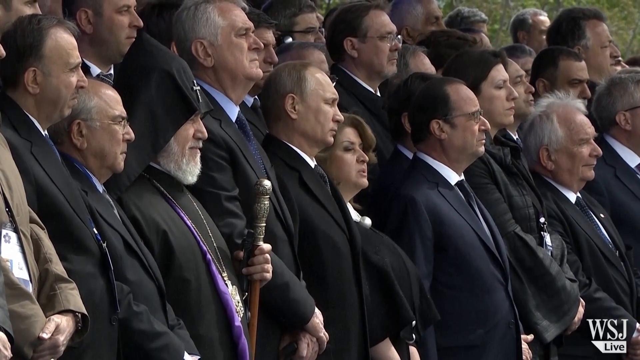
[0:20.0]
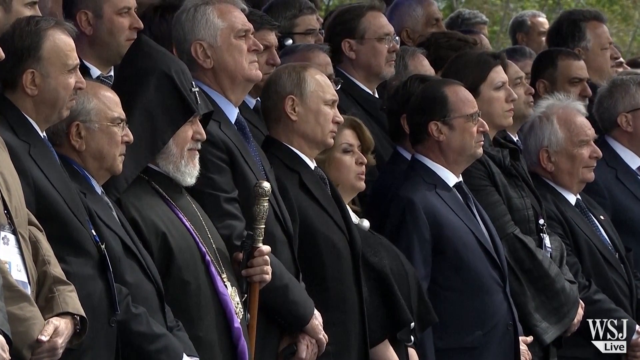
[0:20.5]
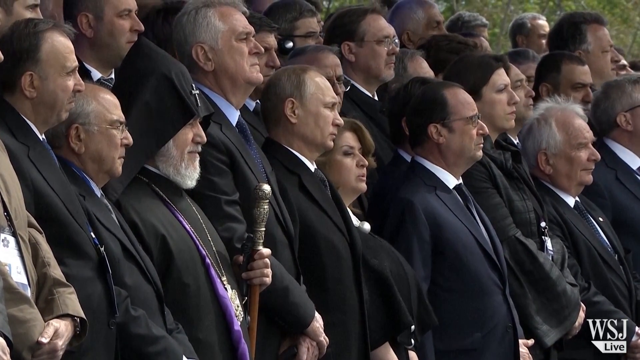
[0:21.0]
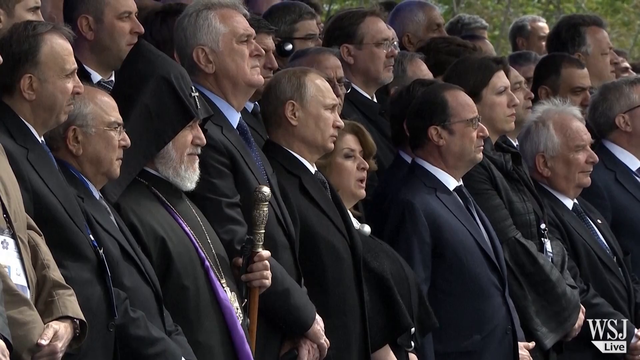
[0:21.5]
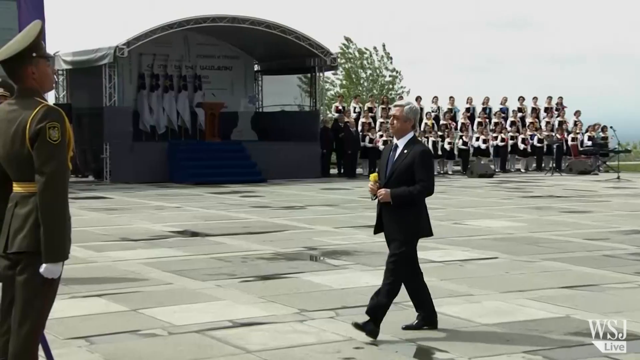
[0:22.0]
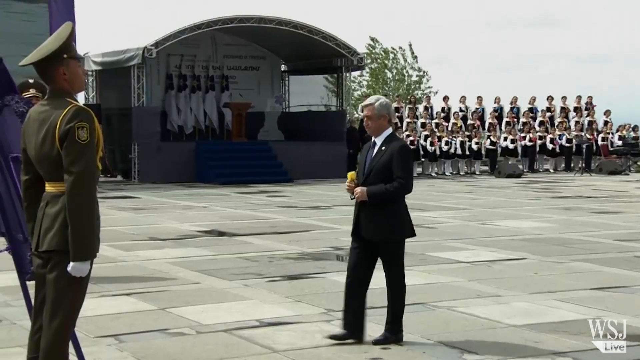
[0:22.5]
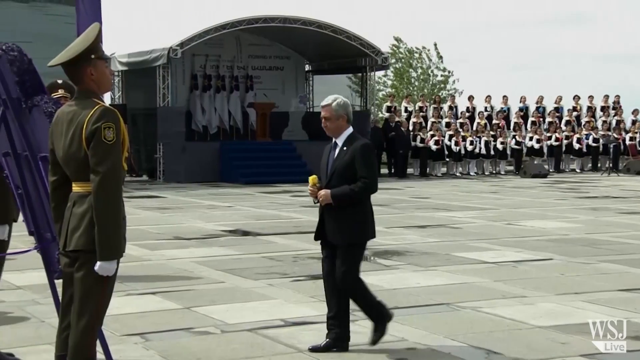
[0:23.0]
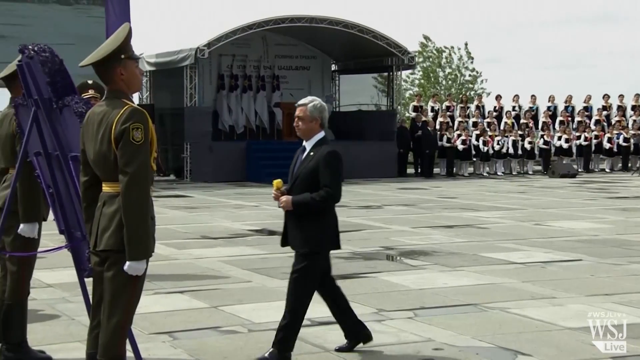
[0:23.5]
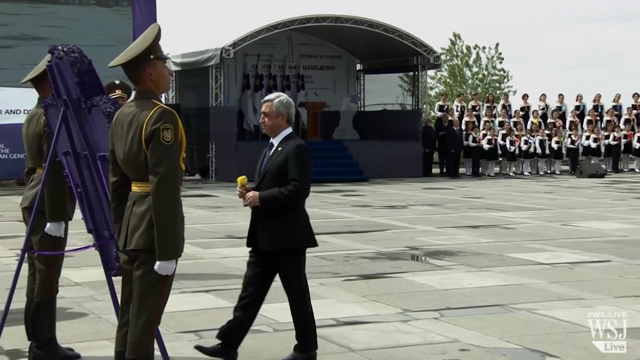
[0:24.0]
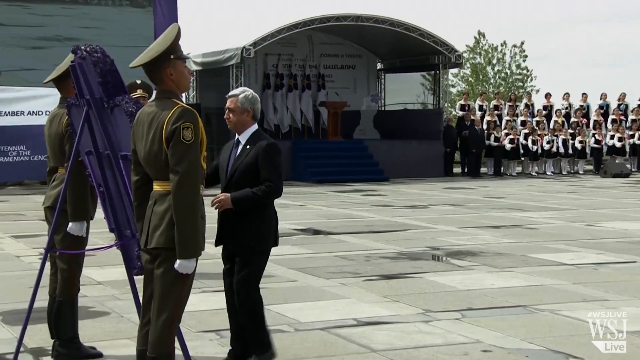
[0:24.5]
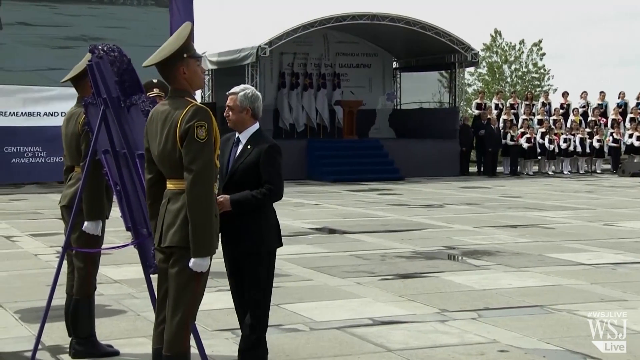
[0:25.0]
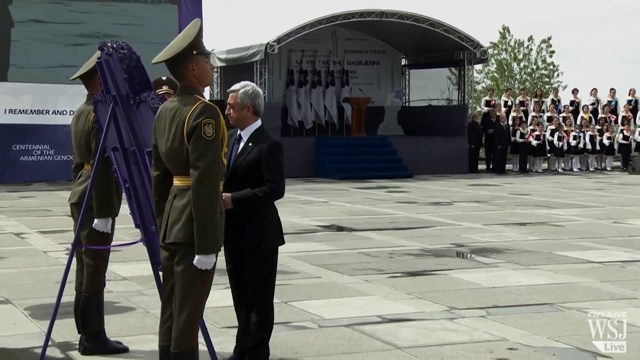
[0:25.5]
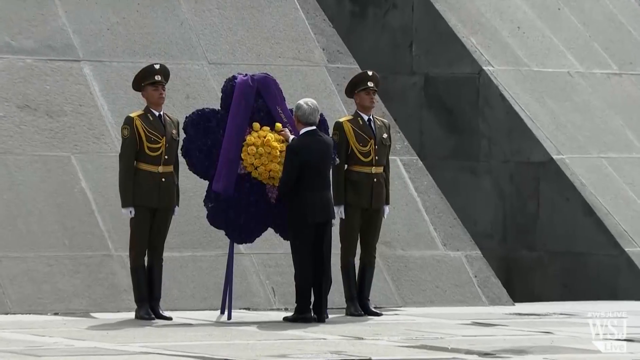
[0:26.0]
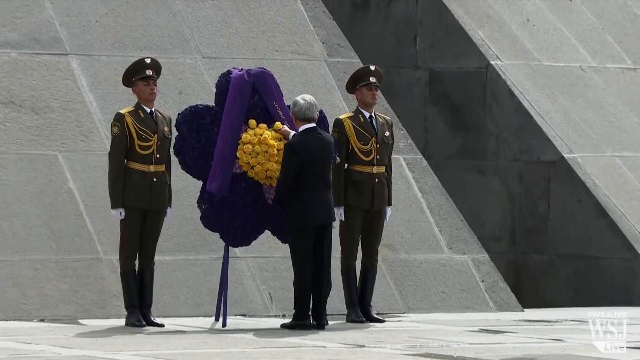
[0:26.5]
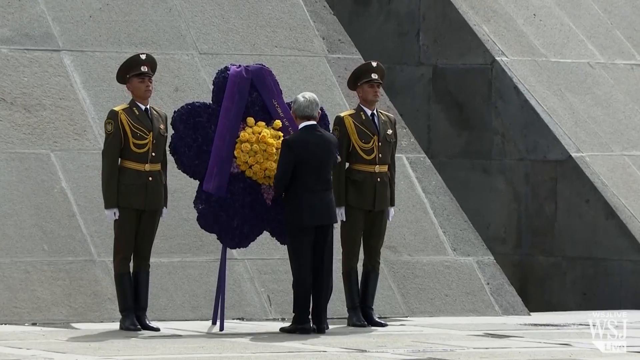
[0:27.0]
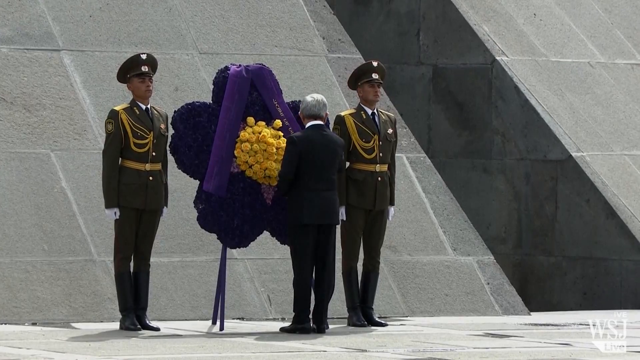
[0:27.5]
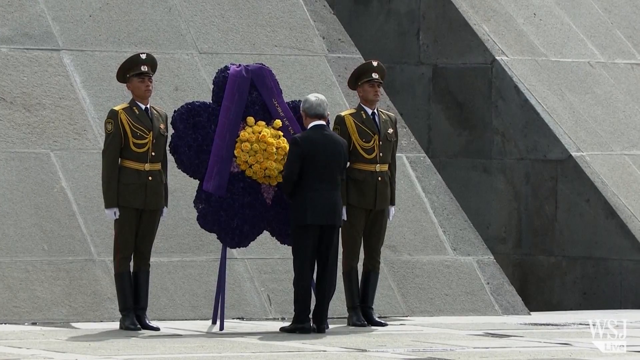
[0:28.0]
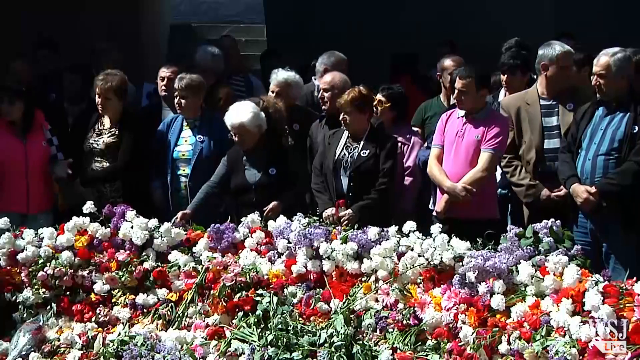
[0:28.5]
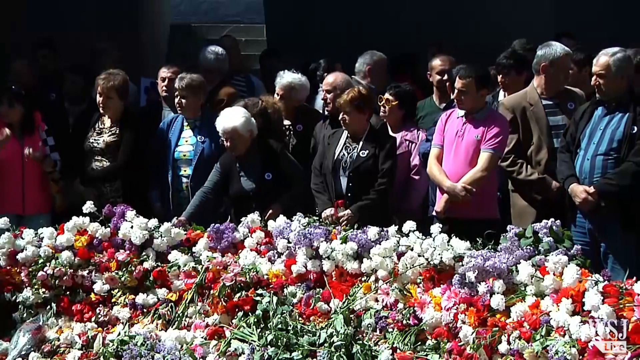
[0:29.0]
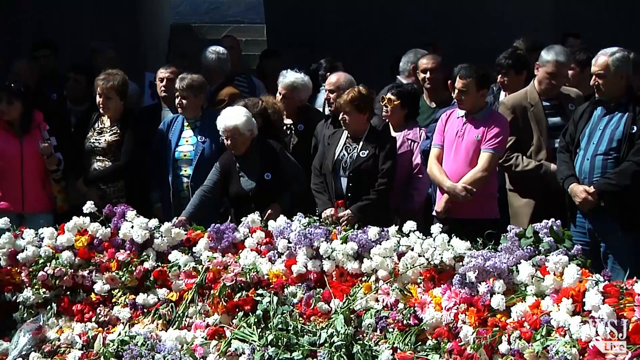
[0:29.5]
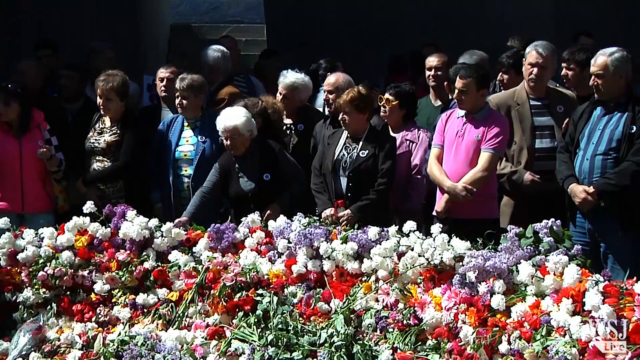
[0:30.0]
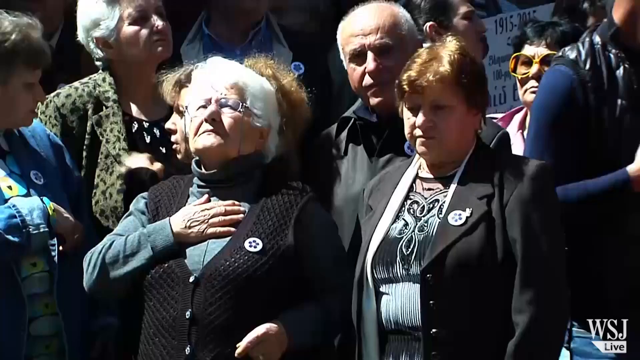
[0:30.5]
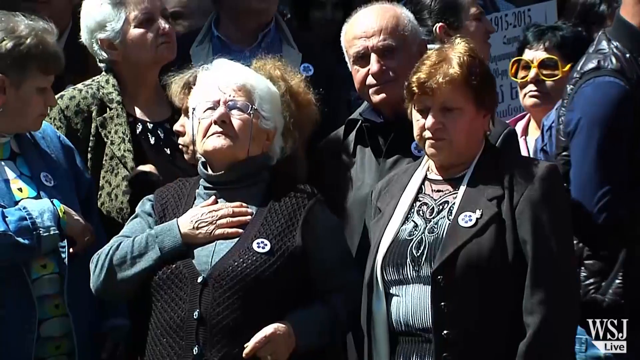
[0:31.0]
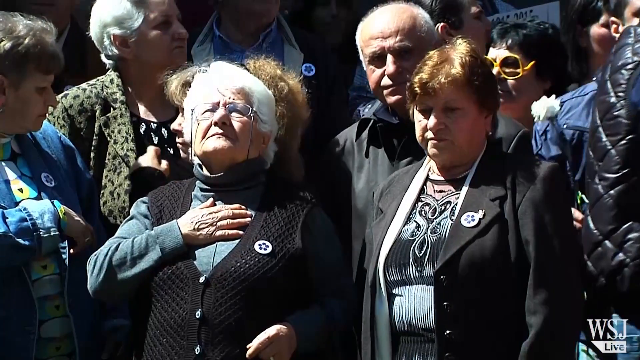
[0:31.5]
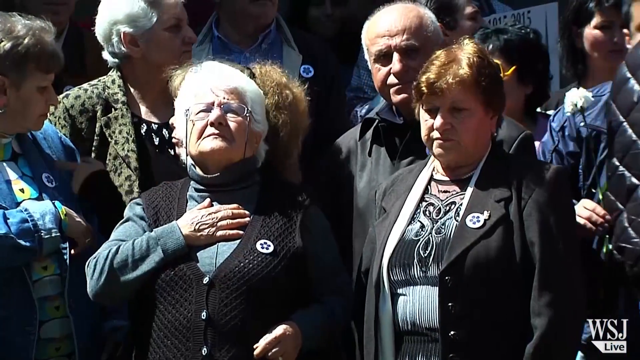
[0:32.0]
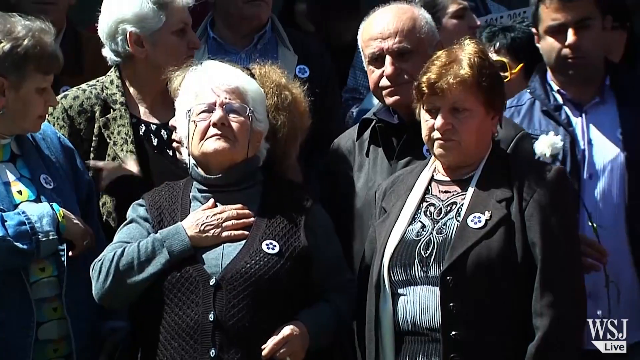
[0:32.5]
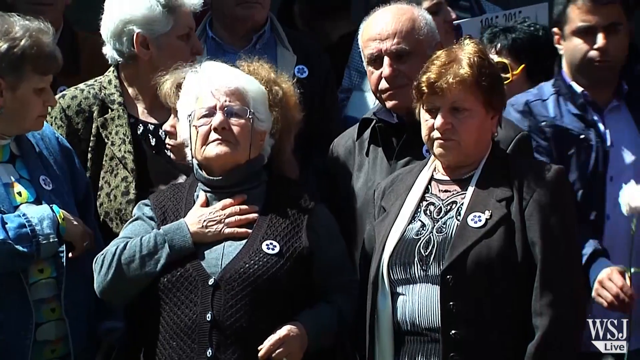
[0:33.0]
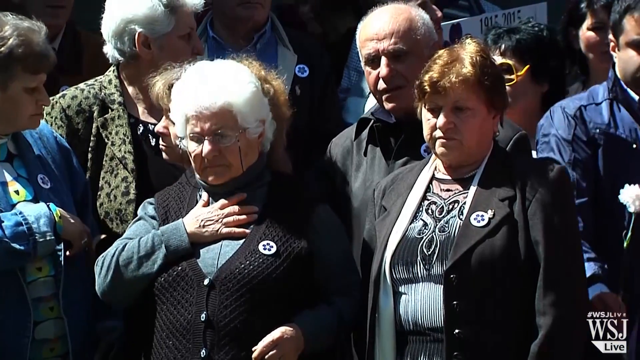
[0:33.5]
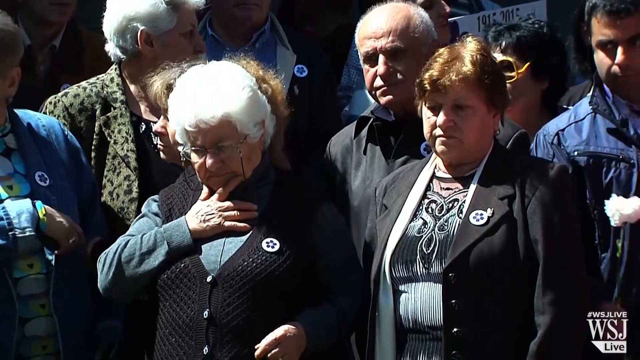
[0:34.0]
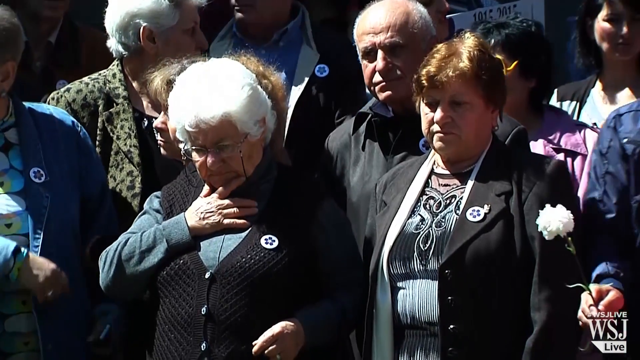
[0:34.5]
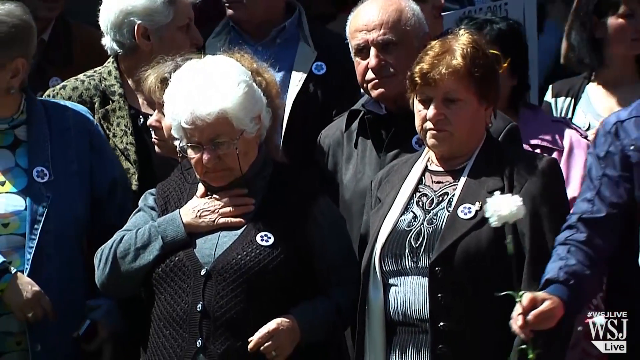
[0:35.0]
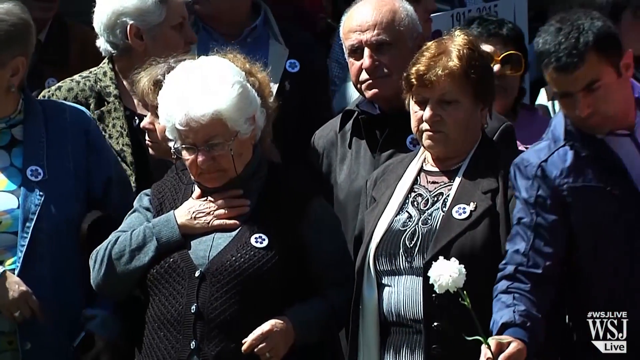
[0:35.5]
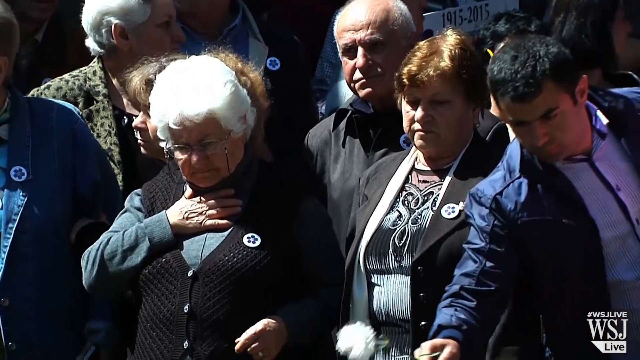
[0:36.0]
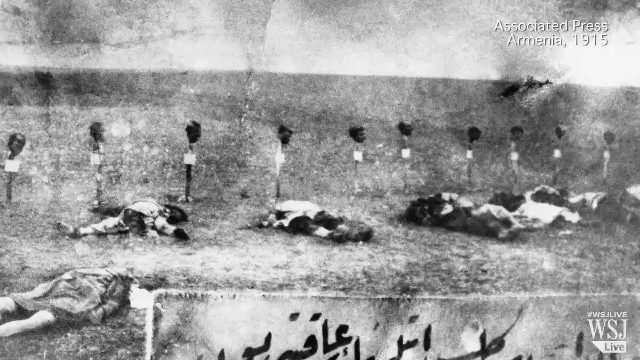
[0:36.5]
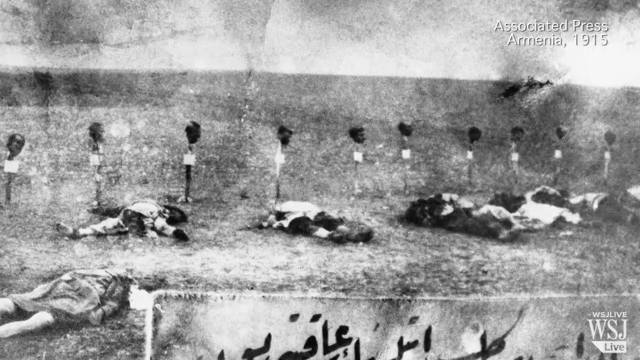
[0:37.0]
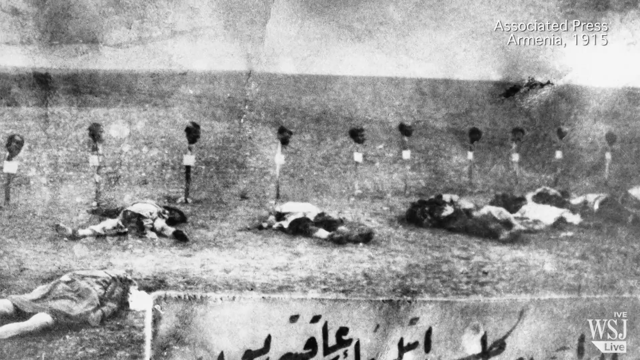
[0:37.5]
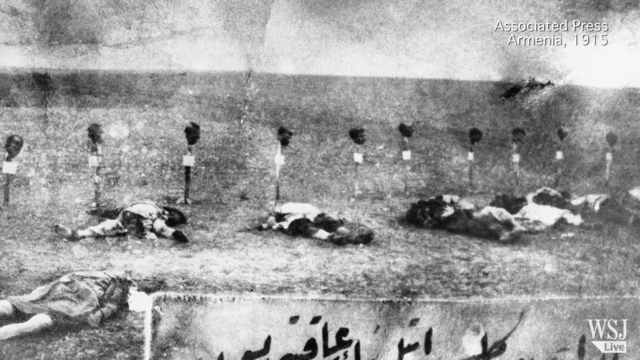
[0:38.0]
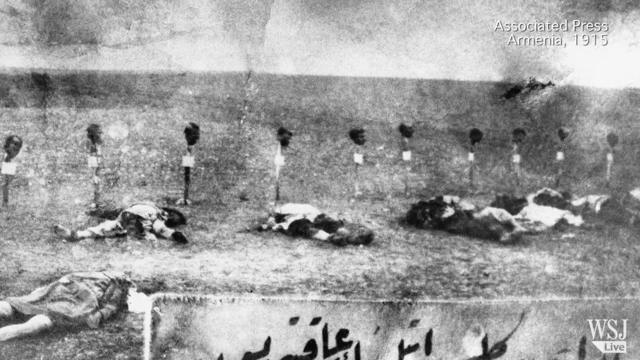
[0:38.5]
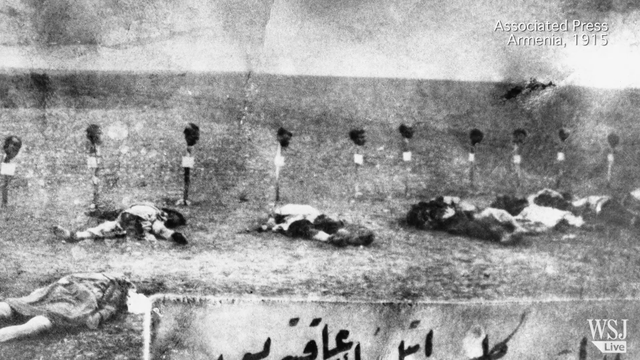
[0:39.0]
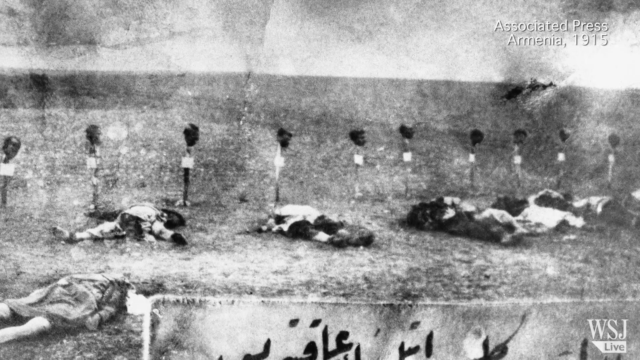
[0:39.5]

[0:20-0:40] The camera is focused on President Putin, then switches to a man in a black suit walking up, going to the left in front of him, holding what looks like a yellow flower of some kind. In the background there is some sort of stand, and the young girls singing are visible in the top right-hand corner of the screen. The man with the flower walks up to soldiers standing at attention, facing right, in olive green uniforms with their hands in their pockets and white gloves on their hands. He puts the yellow flower into a bouquet of flowers between the soldiers. The scene switches to the crowd and focuses on an older lady with gray hair and glasses, her right hand over her chest, looking downward; she then scratches her face slightly with her thumb and middle finger.